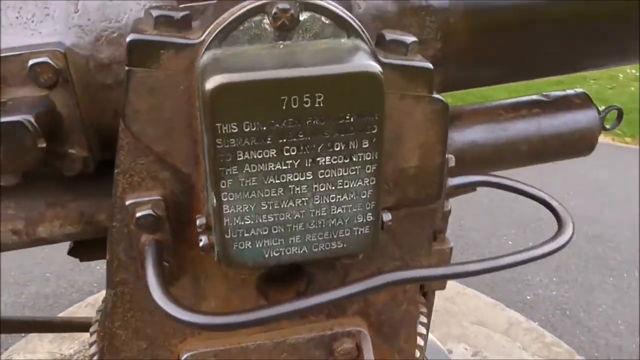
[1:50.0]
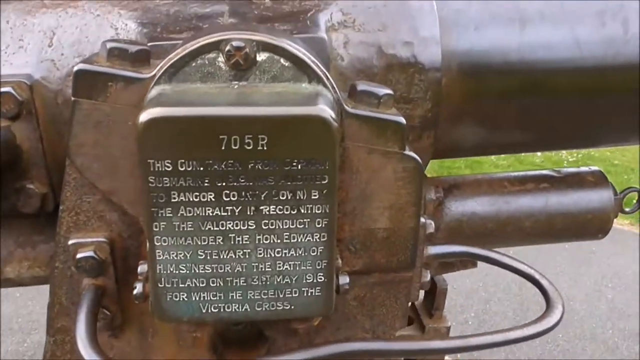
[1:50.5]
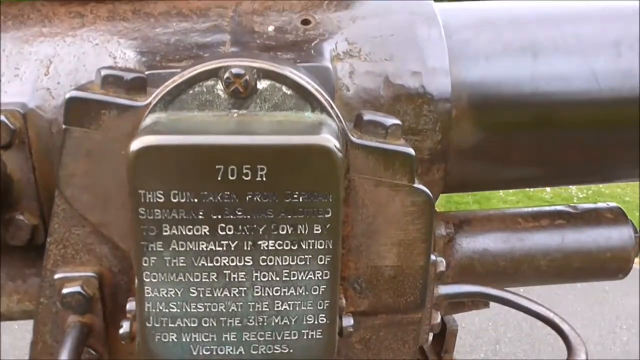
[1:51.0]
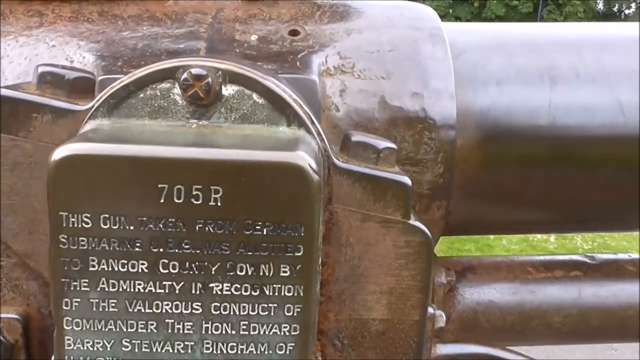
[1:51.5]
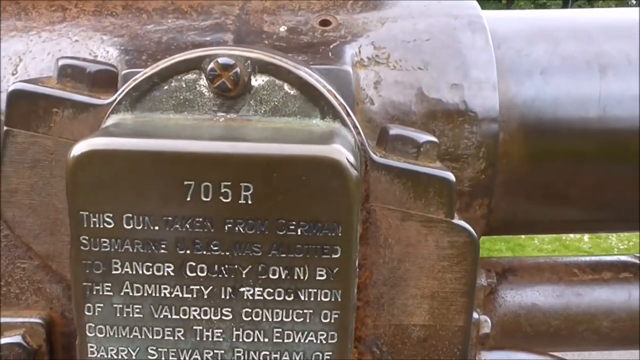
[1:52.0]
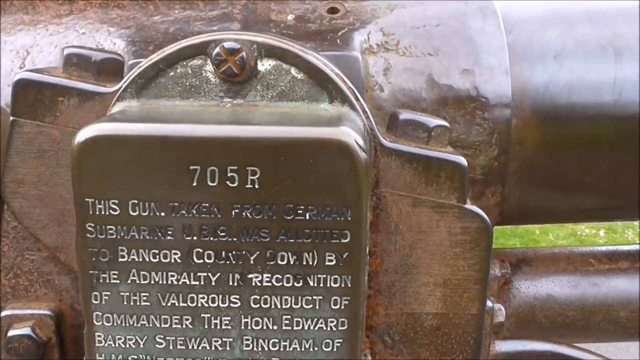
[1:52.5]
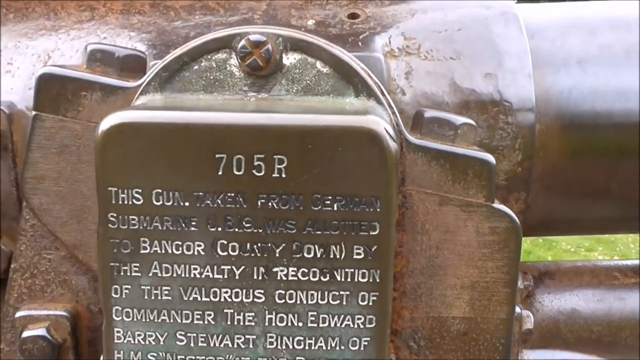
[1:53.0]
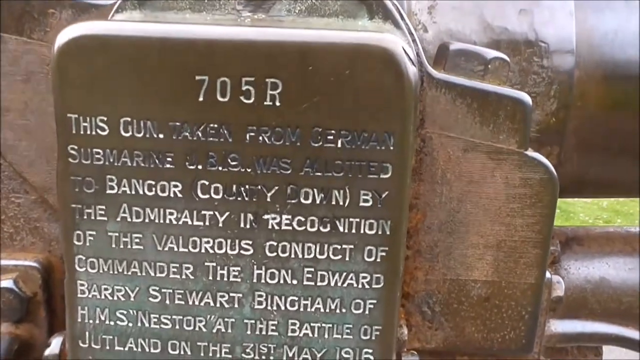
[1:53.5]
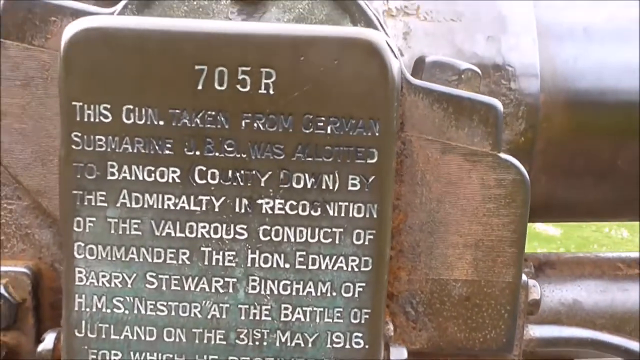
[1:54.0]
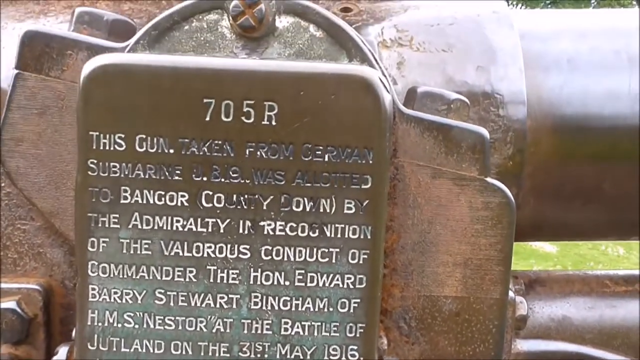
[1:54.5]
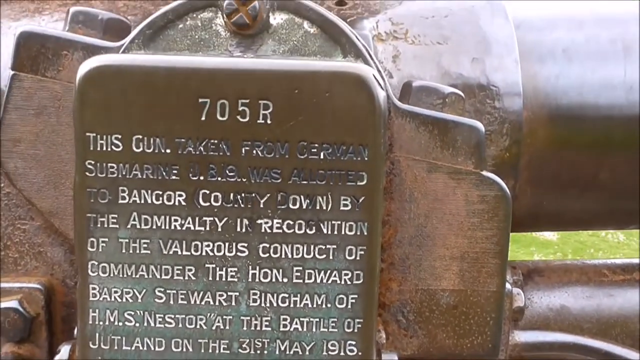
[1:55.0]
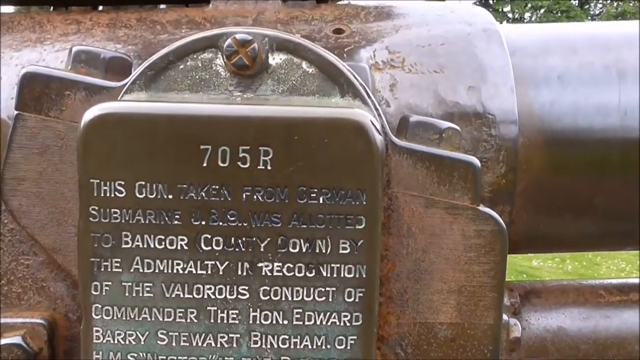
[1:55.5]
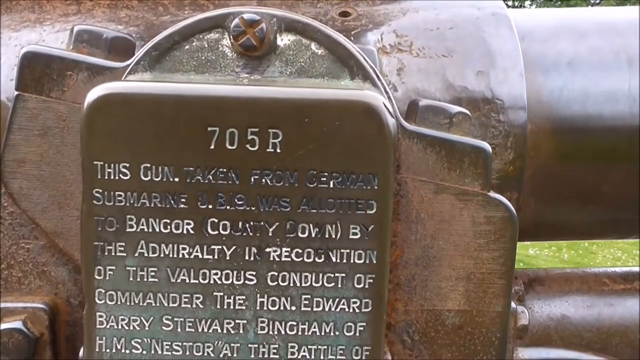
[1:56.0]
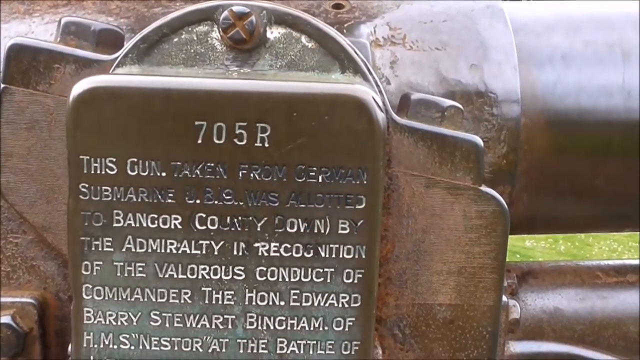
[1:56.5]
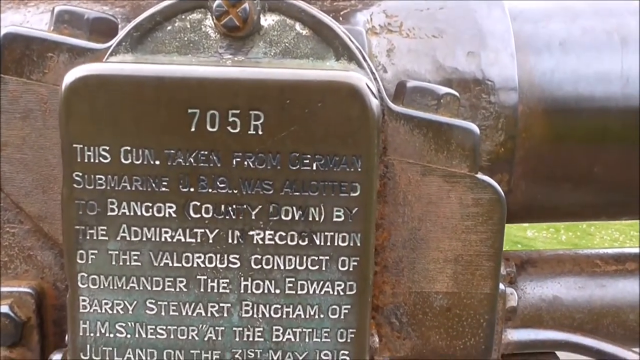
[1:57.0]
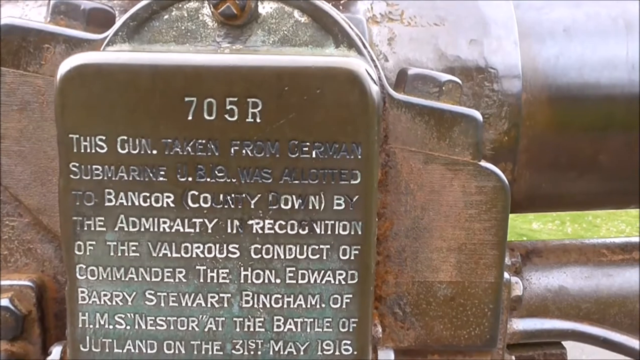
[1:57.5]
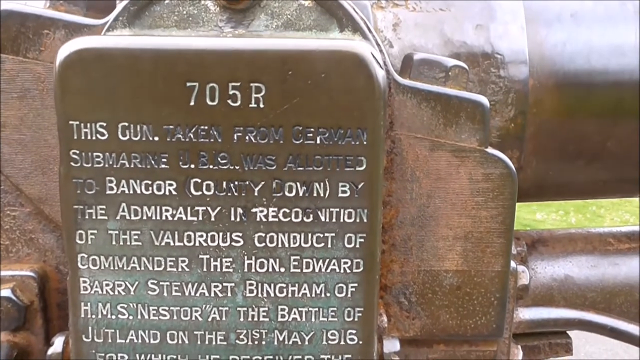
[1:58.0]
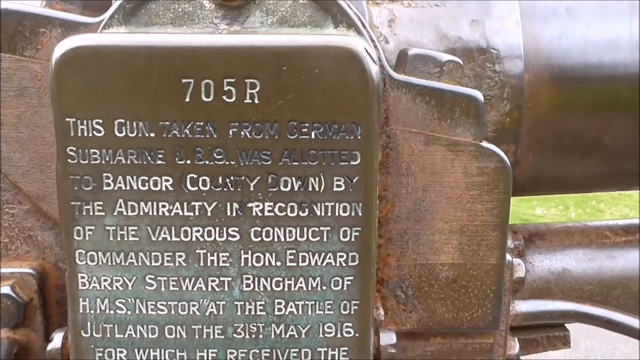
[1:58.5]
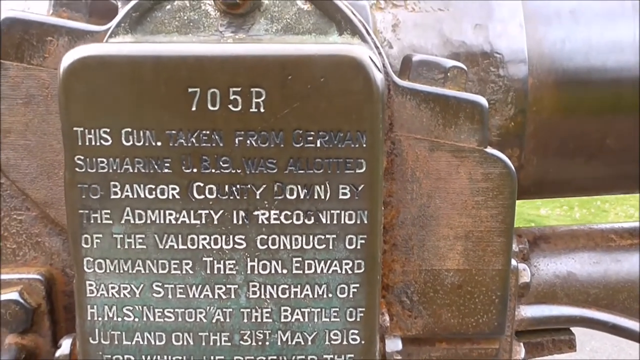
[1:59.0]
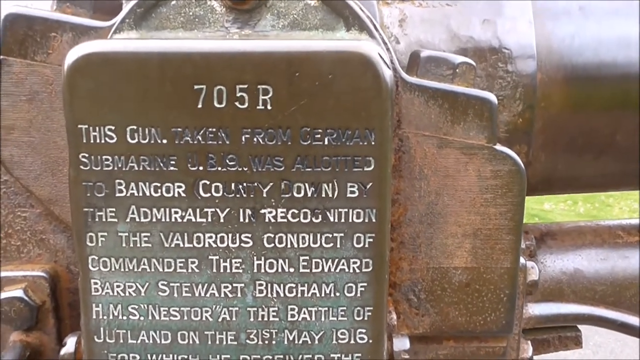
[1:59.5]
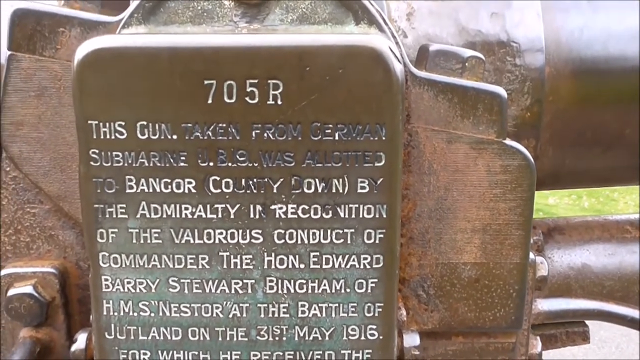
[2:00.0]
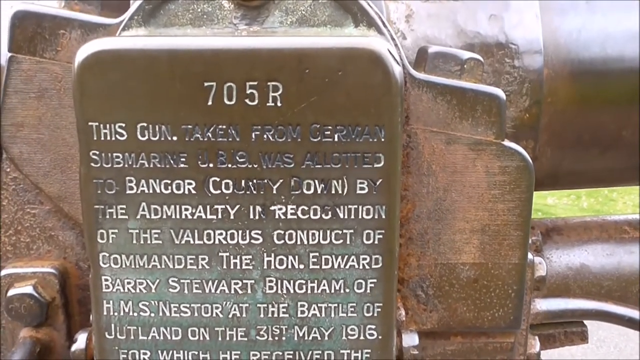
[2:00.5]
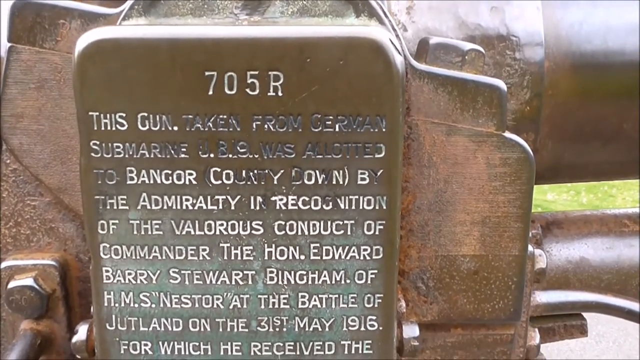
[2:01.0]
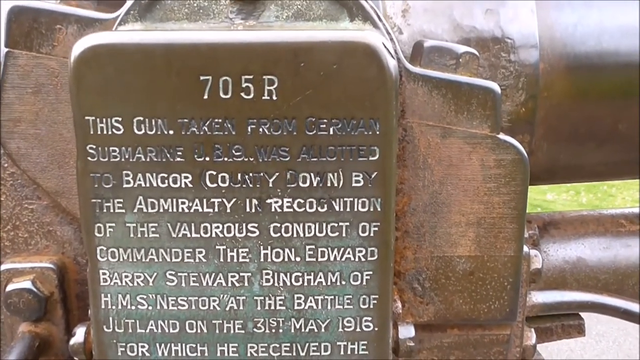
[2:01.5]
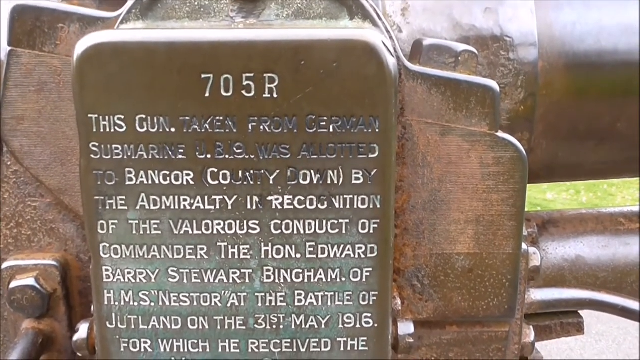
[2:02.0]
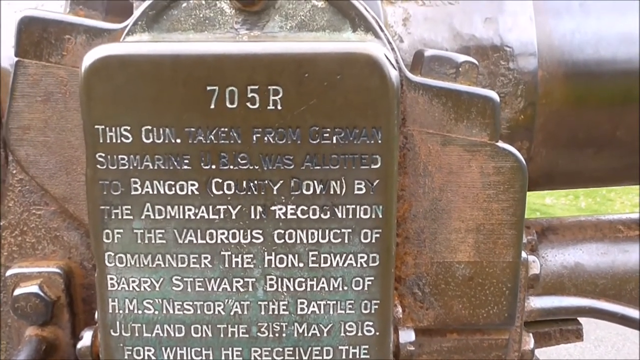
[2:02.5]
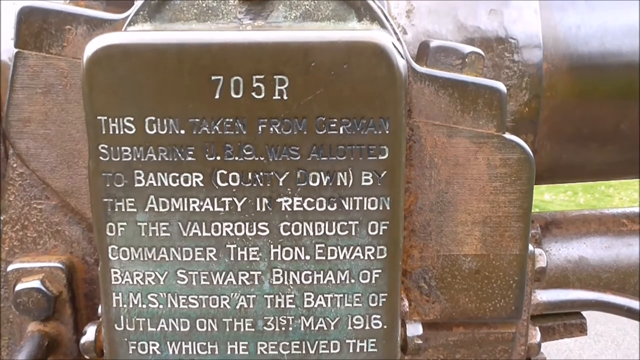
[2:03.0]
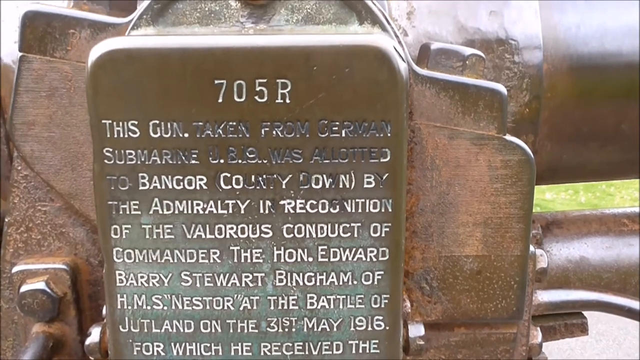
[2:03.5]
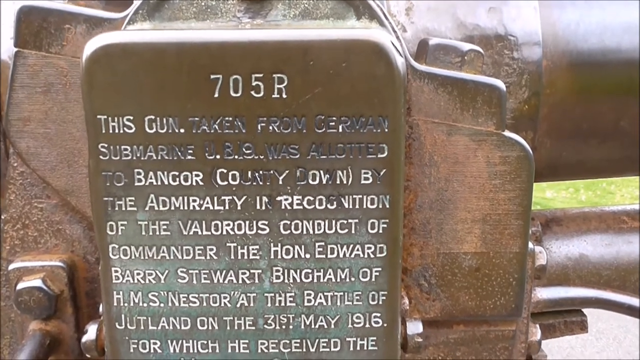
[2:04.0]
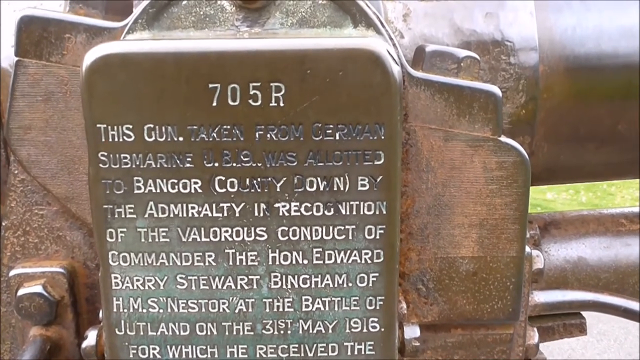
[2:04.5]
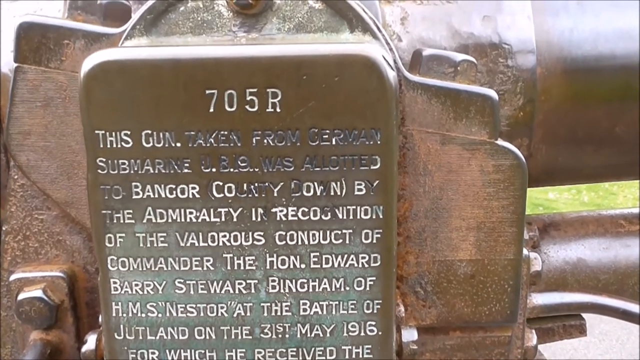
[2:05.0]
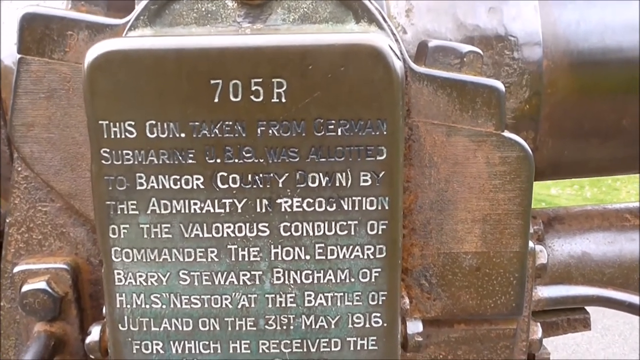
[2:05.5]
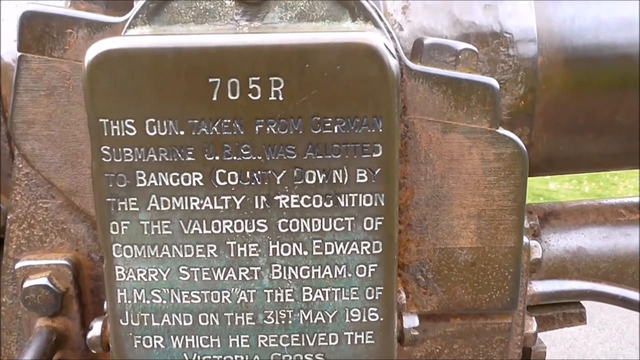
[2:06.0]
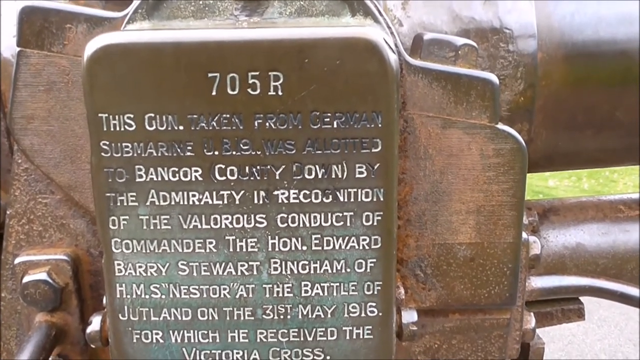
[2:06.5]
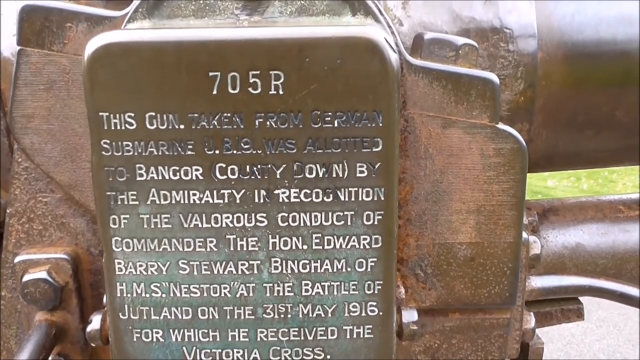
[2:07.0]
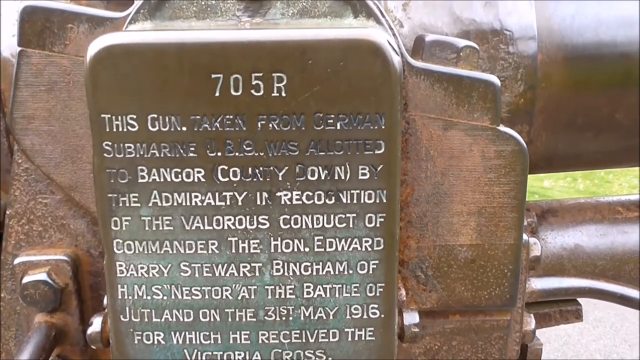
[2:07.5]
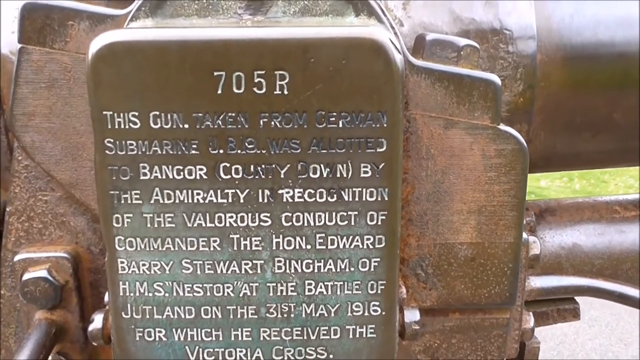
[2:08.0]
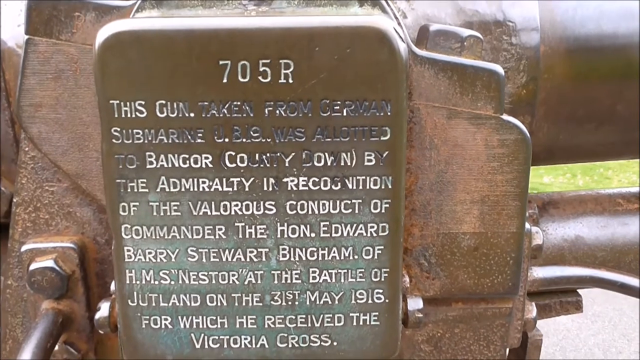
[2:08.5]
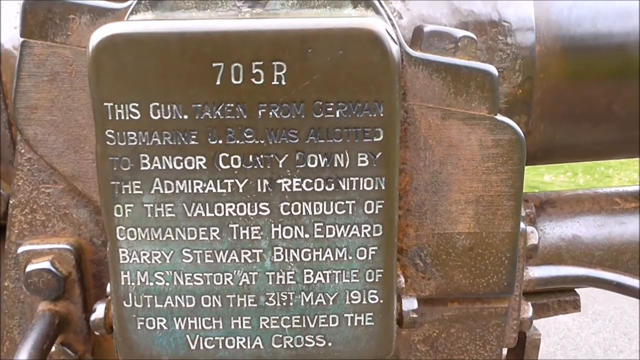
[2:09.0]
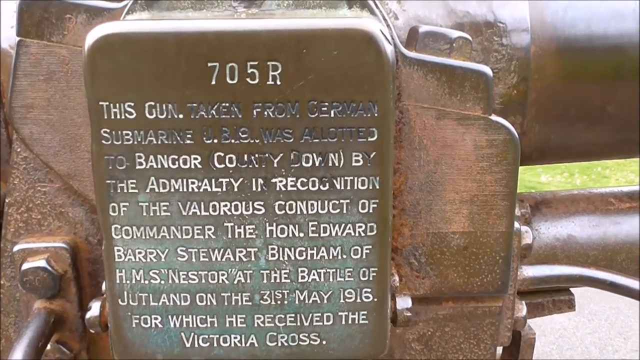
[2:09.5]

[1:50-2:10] A close-up shows a small plaque attached to the side of an artillery gun on display in a park. The plaque bears a long inscription, part of which is obscured because the white paint on it has worn off. The camera pulls in close enough for the obscured part to be read. At the top it says "705R," and below that the text reads "This gun, taken from German submarine UBS, was allotted to Bangor County Down by the Admiralty in recognition of the valorous conduct of Commander The Hon Edward Barry Stewart Bingham of H.M.S. "Nestor" at the Battle of Jutland on the 31st May 1916, for which he received the Victoria Cross." The camera stays focused on the plaque for quite a while and is slightly shaky, as though the video is being taken on a phone. Most of the lines are readable, but some are still slightly obscured, with some letters hard to make out.